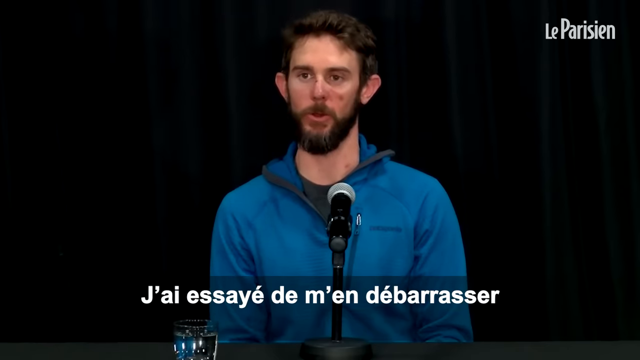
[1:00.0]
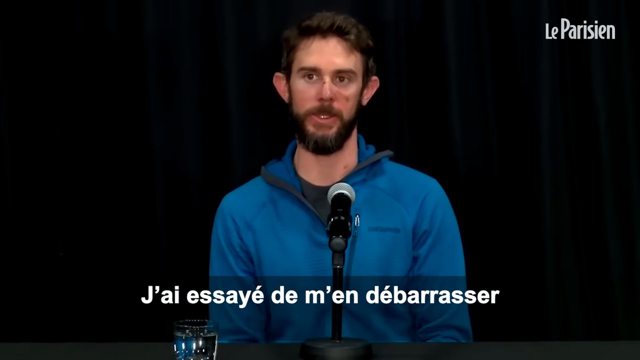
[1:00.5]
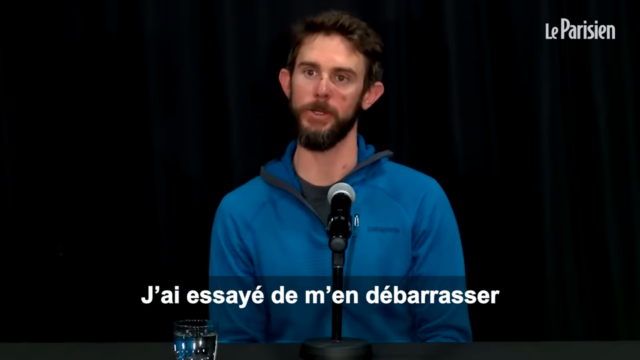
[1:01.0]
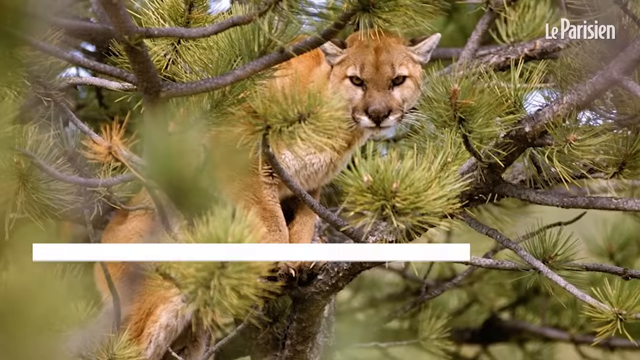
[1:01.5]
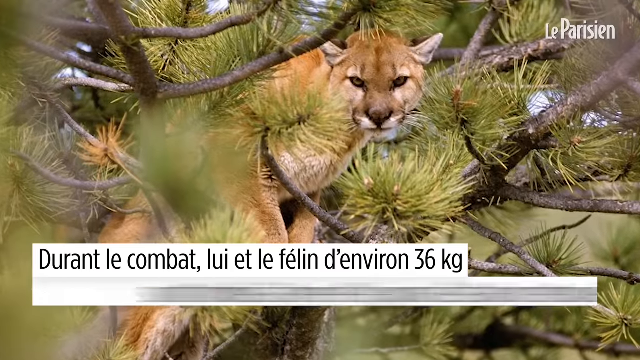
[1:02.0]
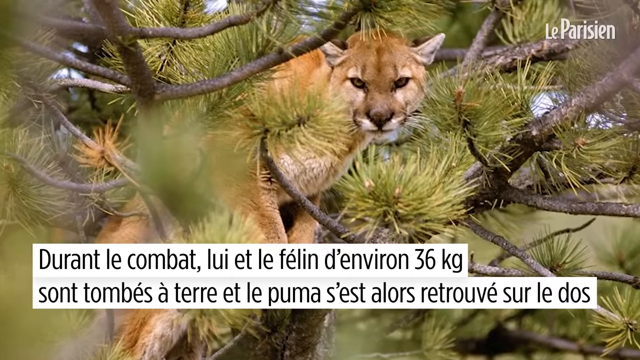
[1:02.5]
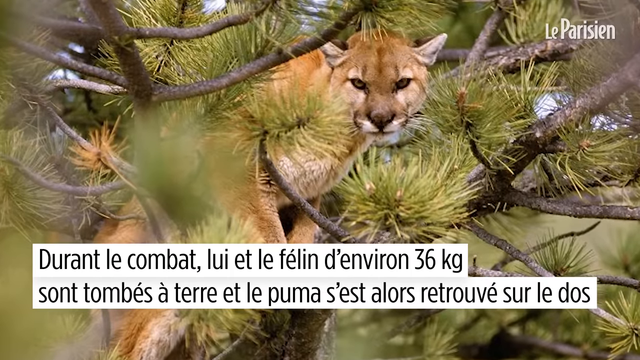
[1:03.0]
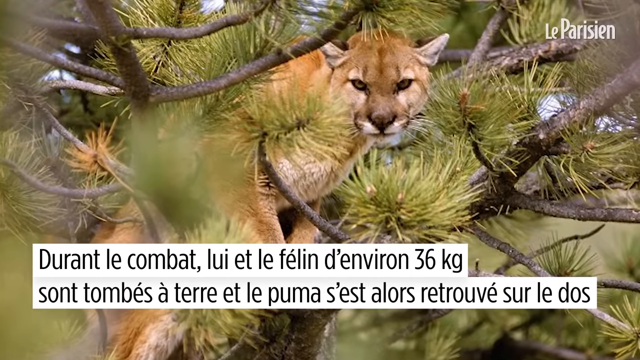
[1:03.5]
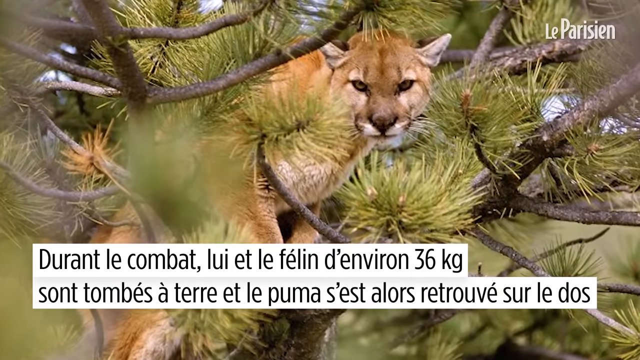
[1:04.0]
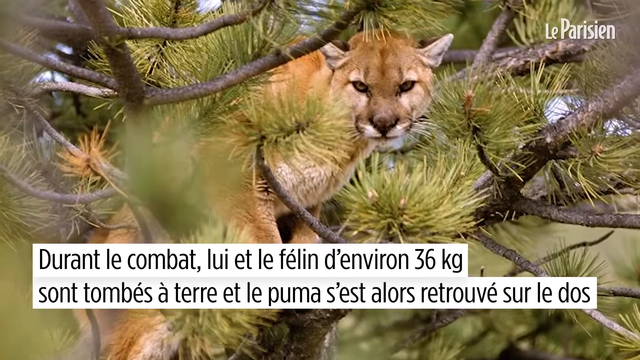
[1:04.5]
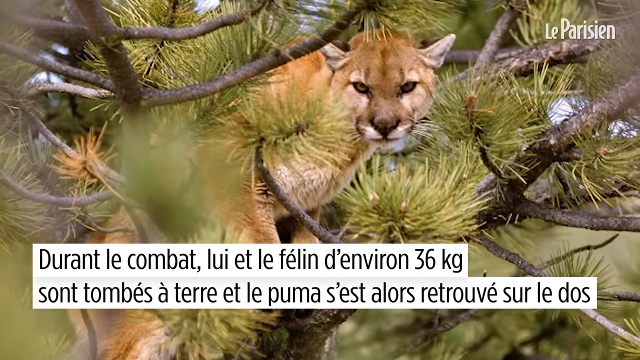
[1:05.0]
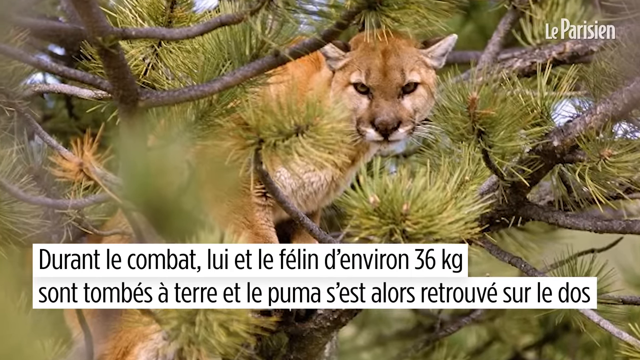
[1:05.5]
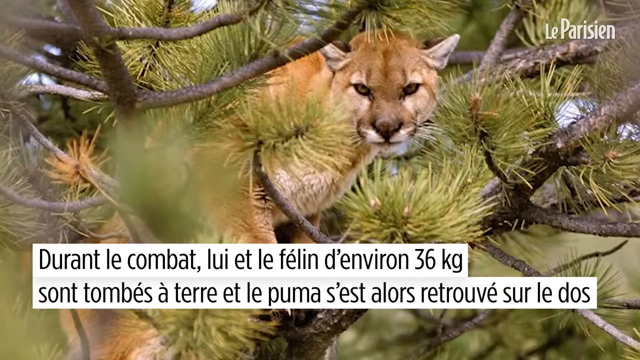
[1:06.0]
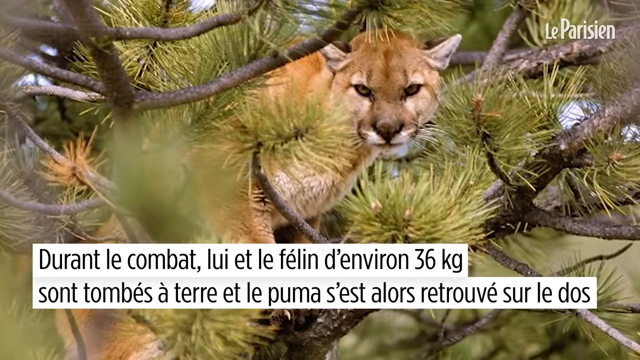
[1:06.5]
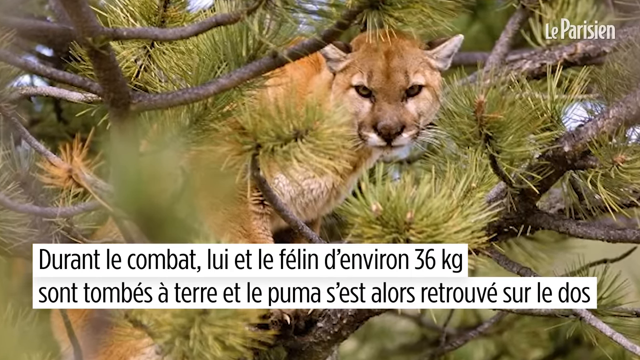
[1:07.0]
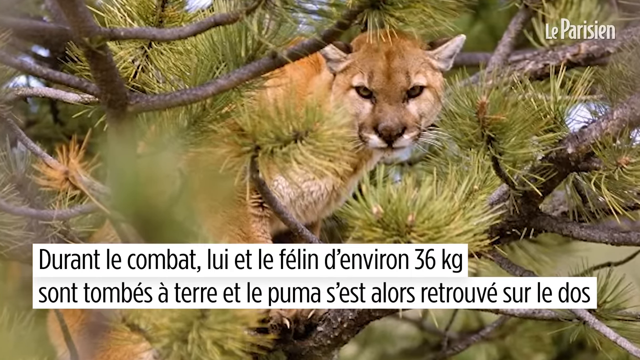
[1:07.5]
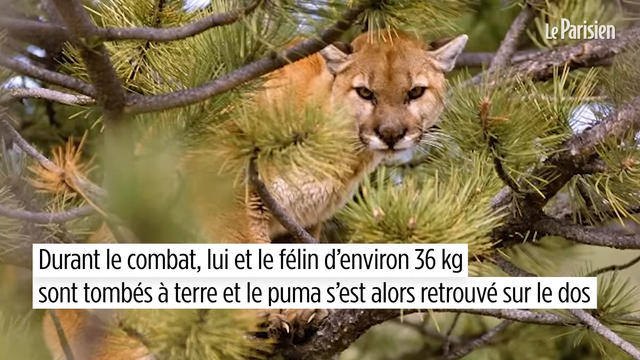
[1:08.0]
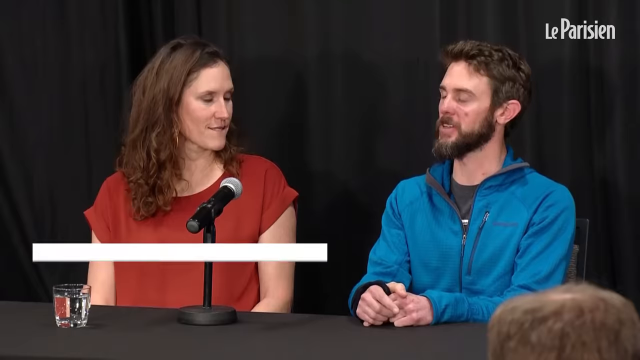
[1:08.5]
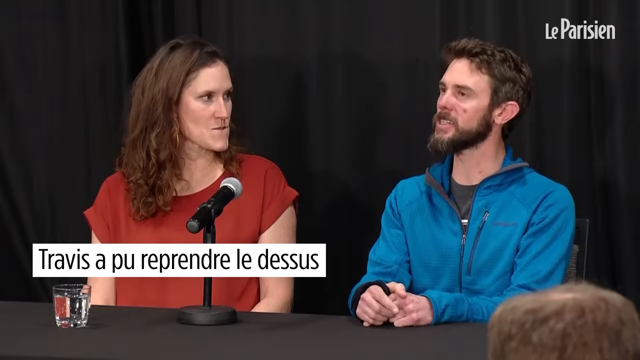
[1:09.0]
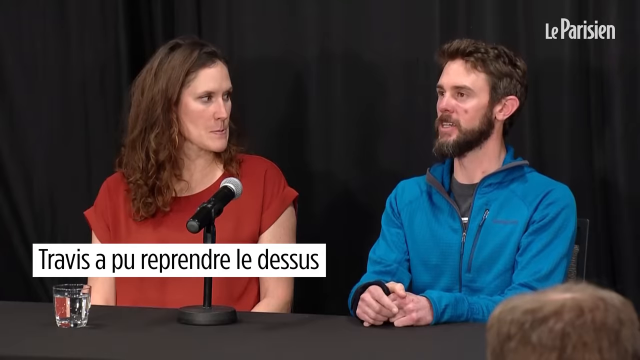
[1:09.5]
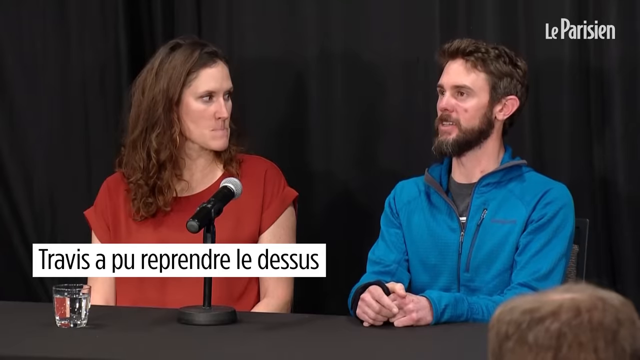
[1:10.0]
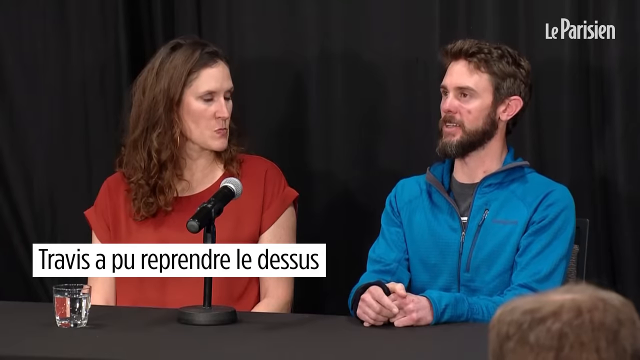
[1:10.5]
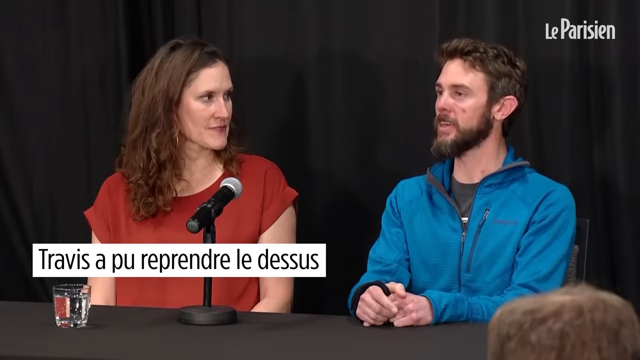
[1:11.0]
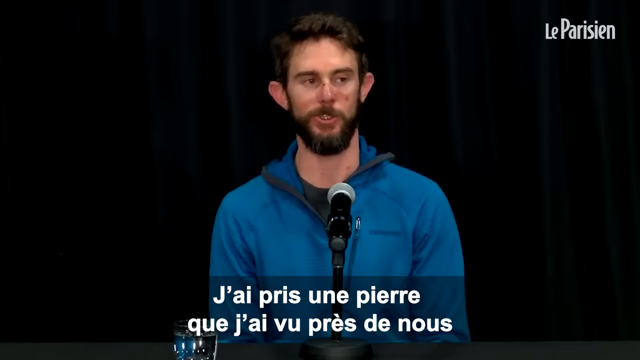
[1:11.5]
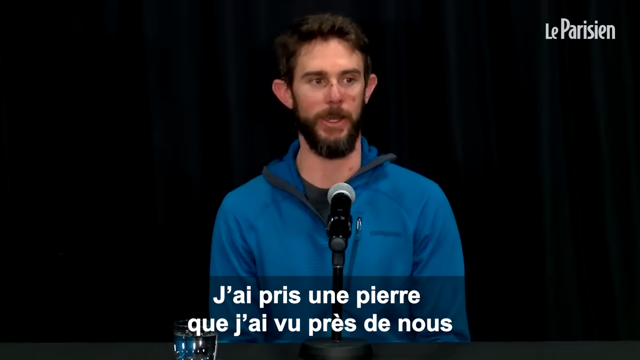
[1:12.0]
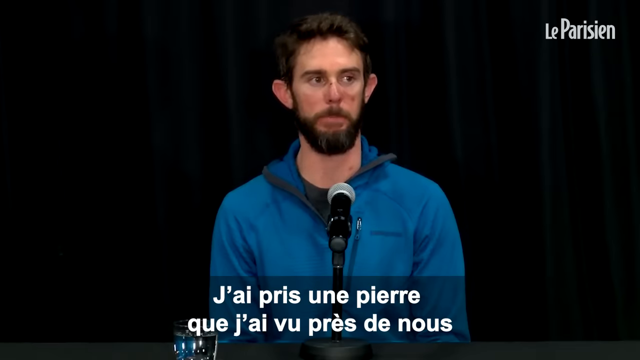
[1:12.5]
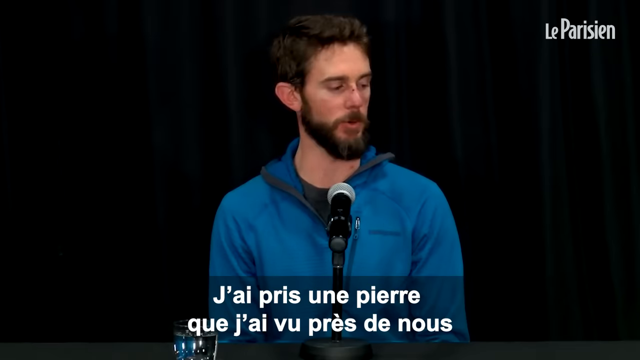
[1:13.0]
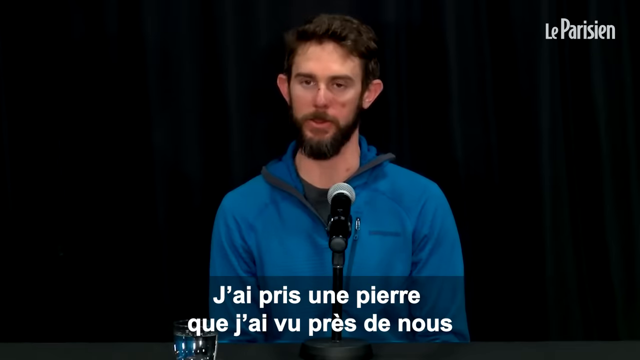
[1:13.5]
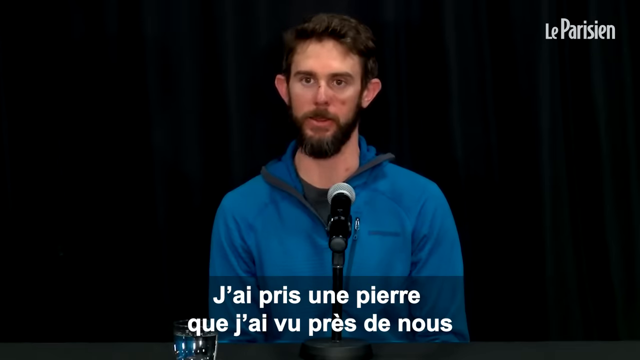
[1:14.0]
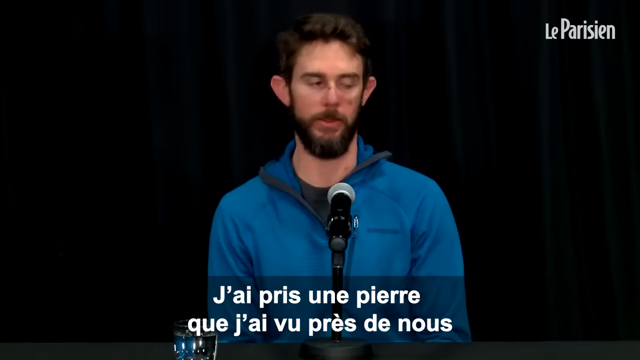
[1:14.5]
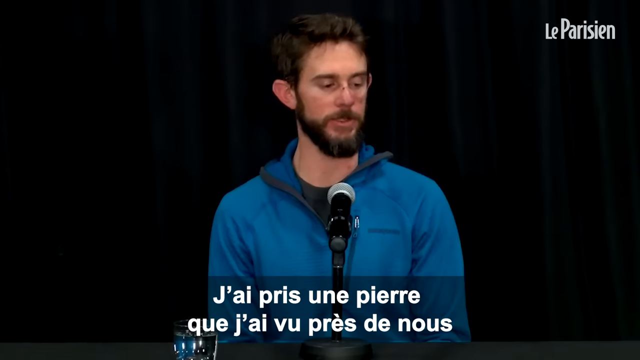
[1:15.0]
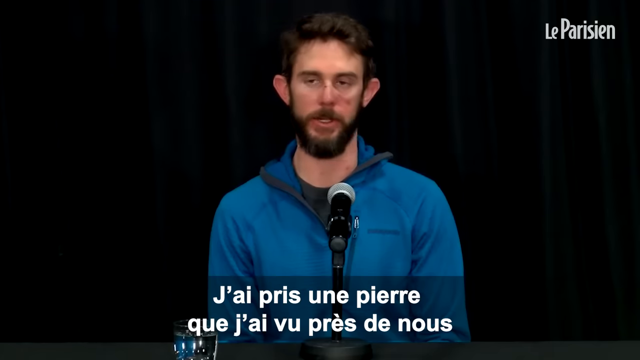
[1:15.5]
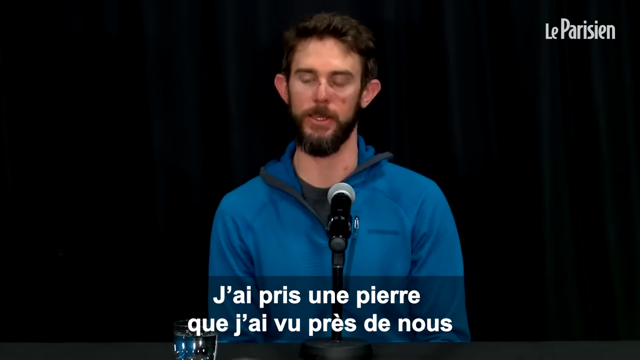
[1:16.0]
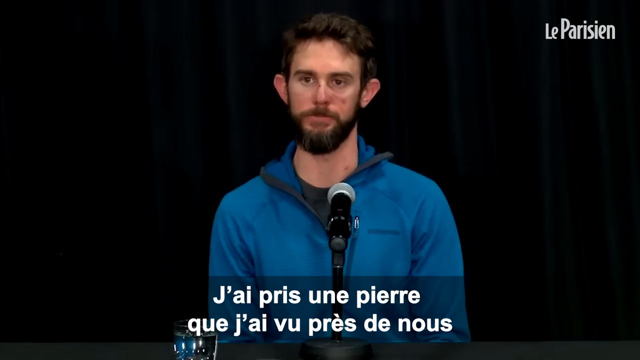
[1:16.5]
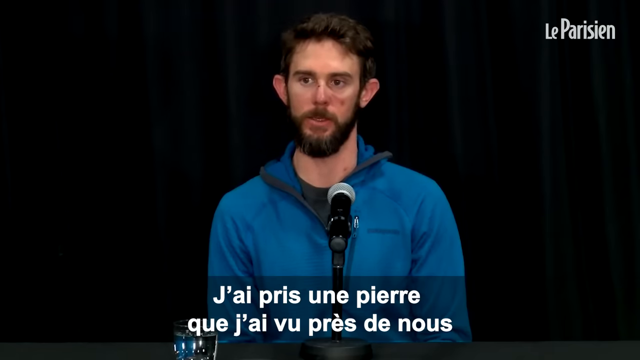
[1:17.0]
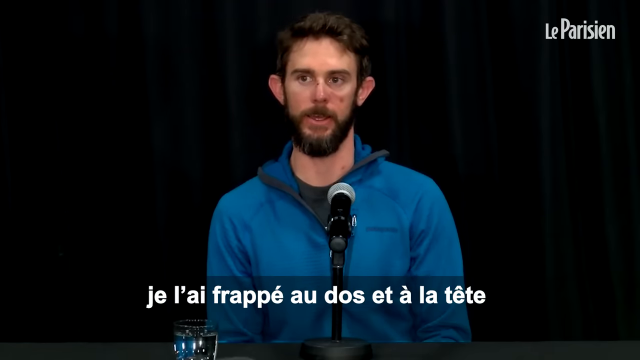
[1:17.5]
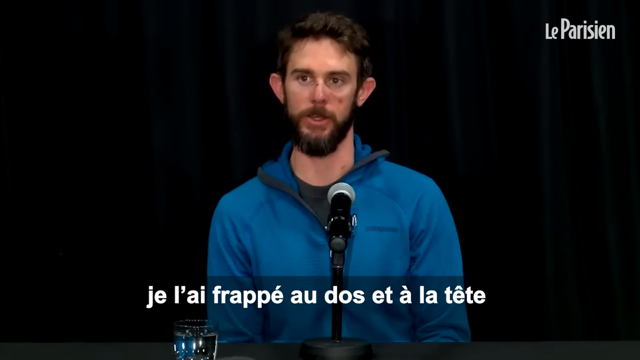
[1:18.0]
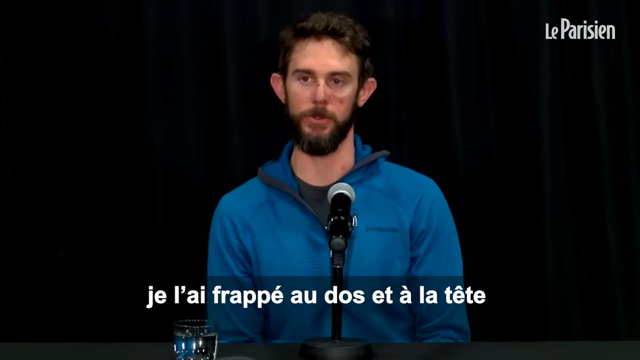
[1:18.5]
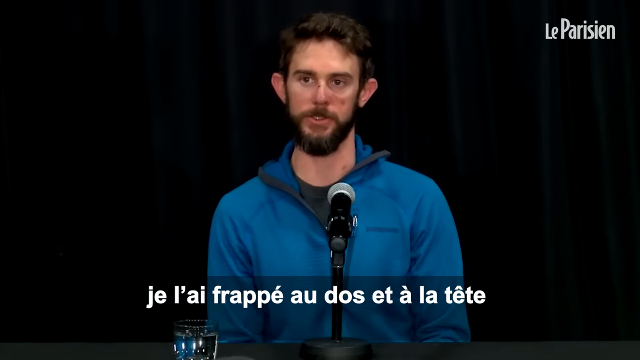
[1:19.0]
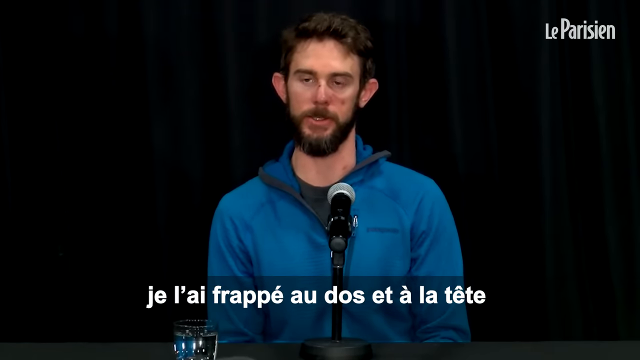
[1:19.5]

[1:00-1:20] The man sits in the center of the scene in a blue jacket with a black shirt underneath. He is very scared. He has short brownish-blackish hair, a beard and a mustache, and sits in front of a black curtain background, talking into a microphone. A logo in gray text at the top right says "La Parisien." As he talks, white text on a black transparent background appears at the bottom of the screen. The scene changes to a picture of a mountain lion sitting in a bunch of branches with little clusters of pines extending from them. The camera slowly pans into the still image as black text on a white background appears at the bottom. The scene changes to the man sitting beside a woman in a red top, who looks at him as he speaks. The scene then changes back to the man alone, centered, talking into the microphone.